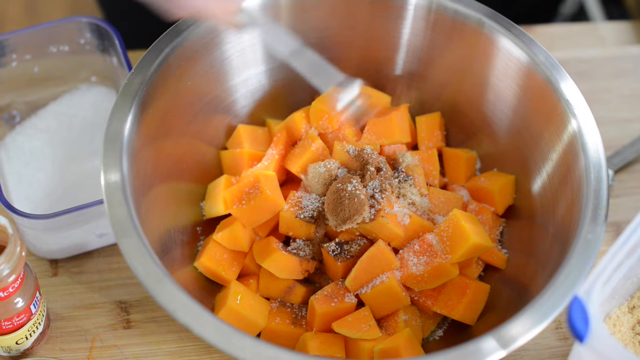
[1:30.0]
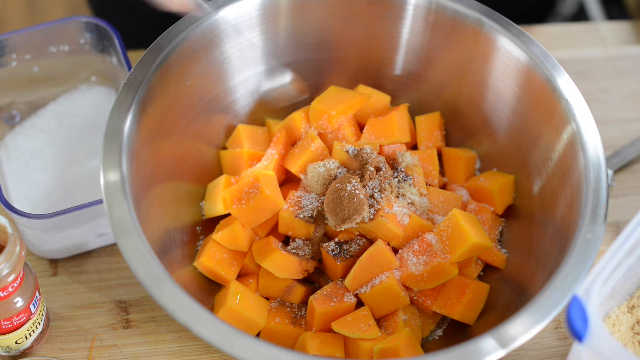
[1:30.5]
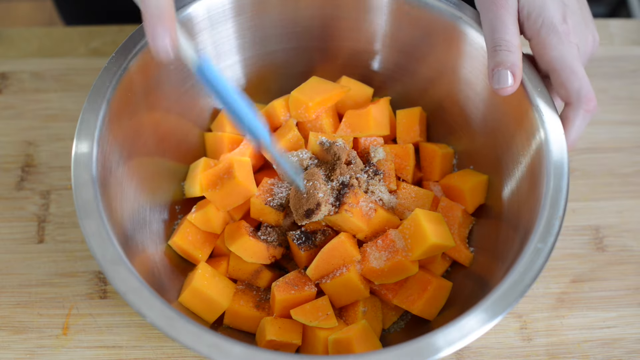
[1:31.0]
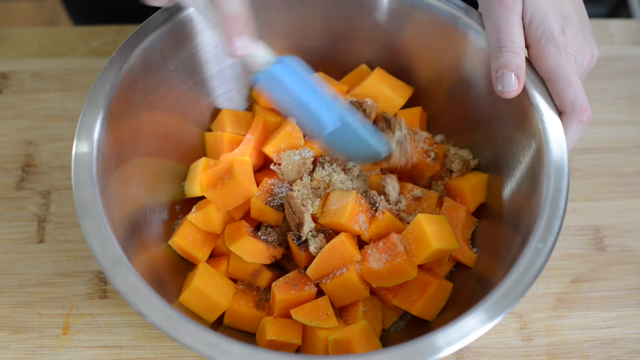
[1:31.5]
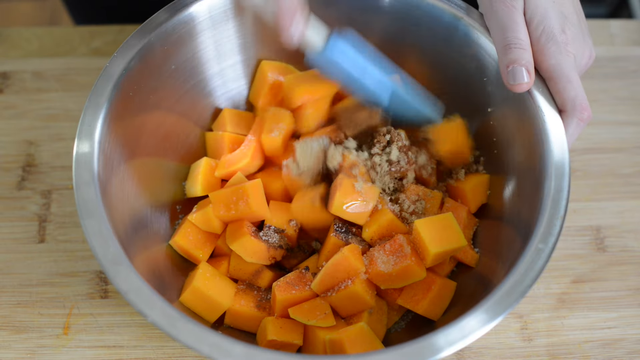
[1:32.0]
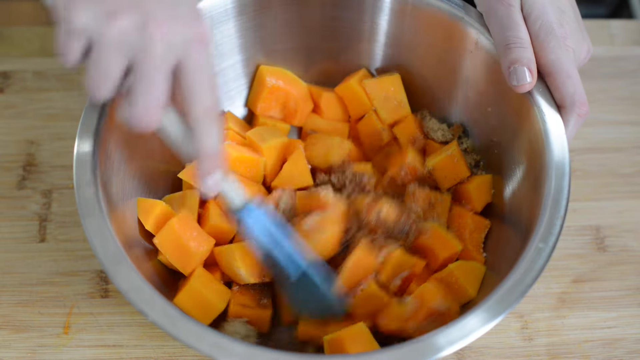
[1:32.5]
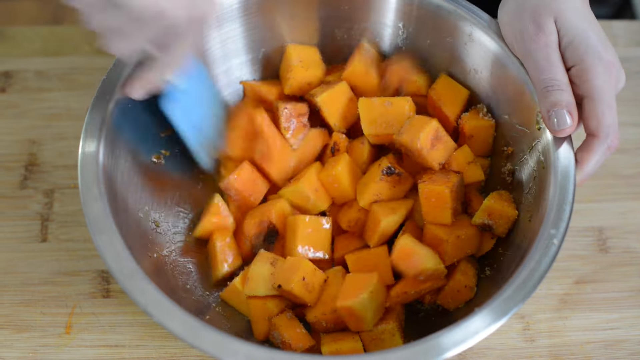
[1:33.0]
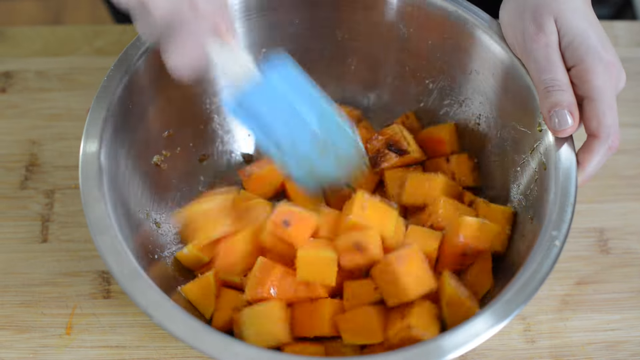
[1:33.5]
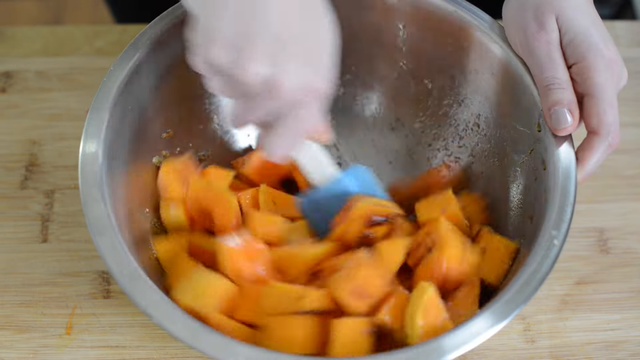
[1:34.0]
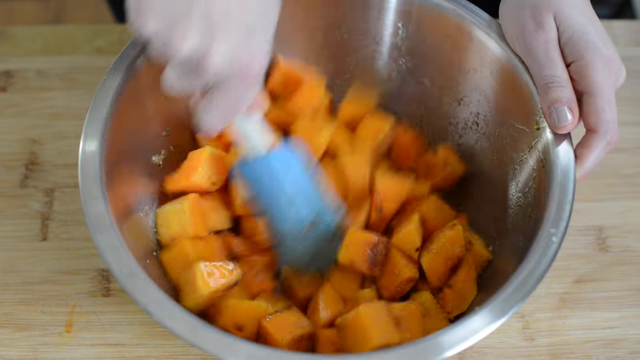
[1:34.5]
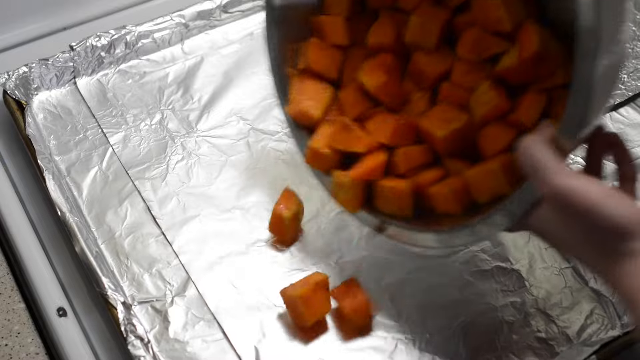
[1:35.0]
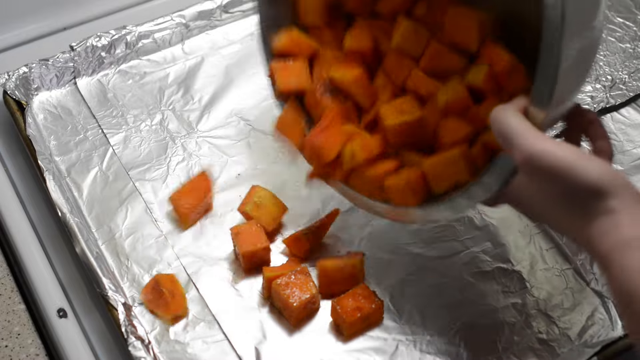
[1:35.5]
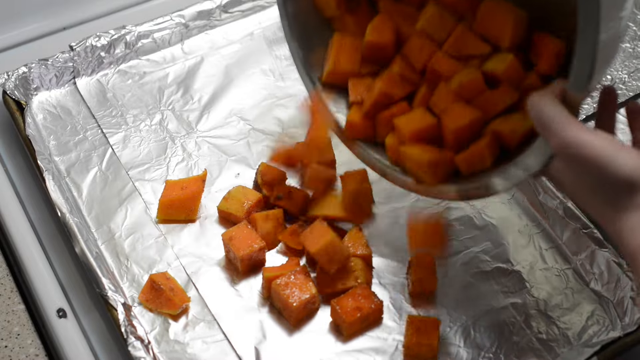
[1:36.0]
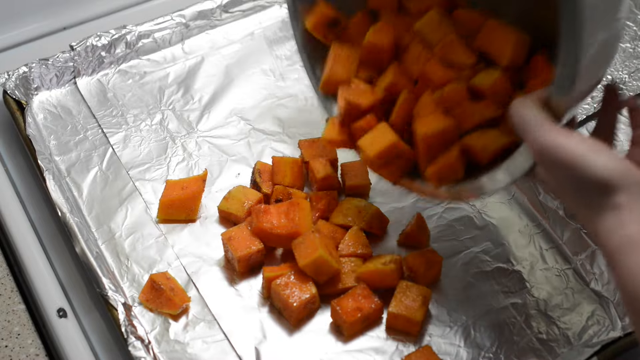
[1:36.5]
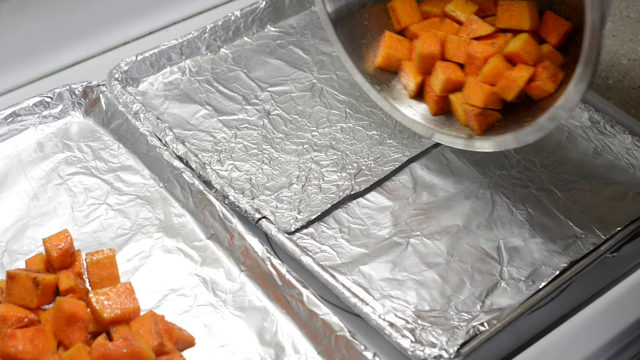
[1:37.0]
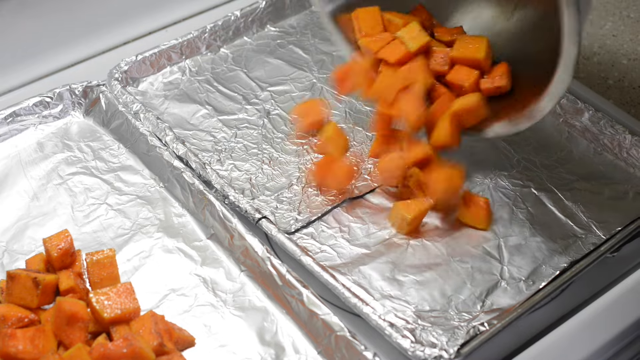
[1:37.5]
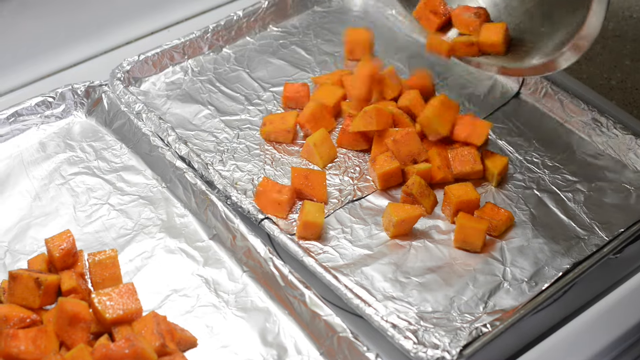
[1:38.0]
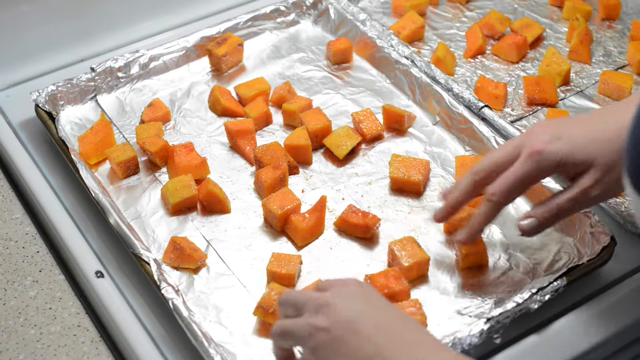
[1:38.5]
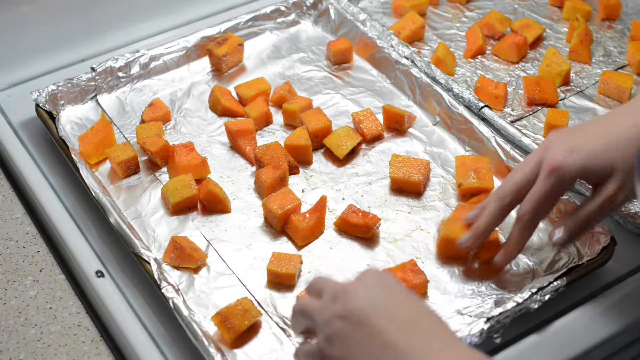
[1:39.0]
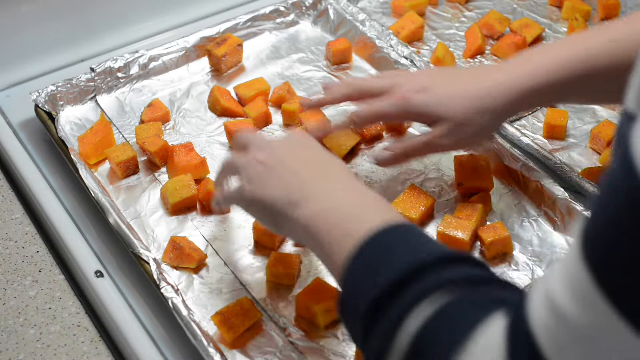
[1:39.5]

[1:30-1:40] In a cooking tutorial, cubed squash pieces are in a giant silver mixing bowl resting on a lighter-toned wood chopping block or counter. A person stirs what looks like a sugared mixture onto the pieces with a spatula that has a light blue head and a white handle, apparently stirring thoroughly. The squash is then dumped out onto two silver cookie sheets, each covered with a sheet of tinfoil; the sheets appear large and look like 13x9s. The person spreads the pieces into an even layer, apparently getting ready to put them into the oven. Many light reflections show on the silver bowl, and what seems to be an overhead oven light makes the squash pieces look almost glistening. The production is amateur quality but neatly done.